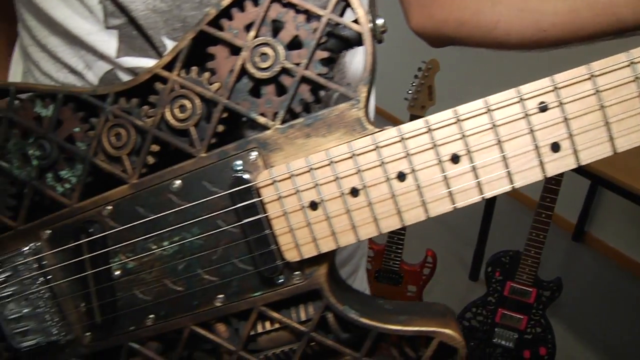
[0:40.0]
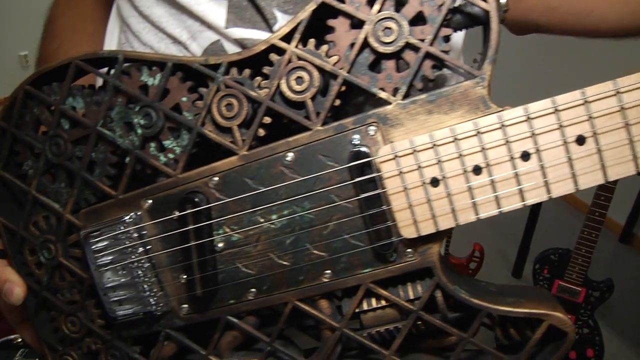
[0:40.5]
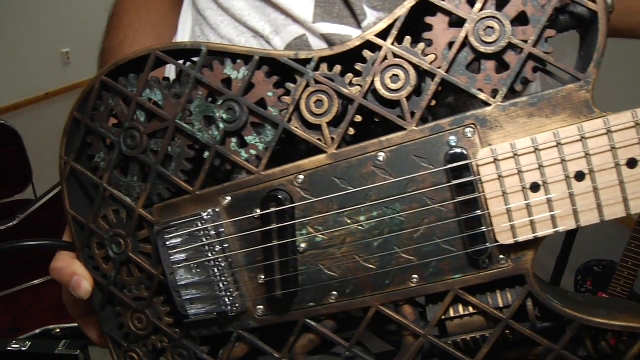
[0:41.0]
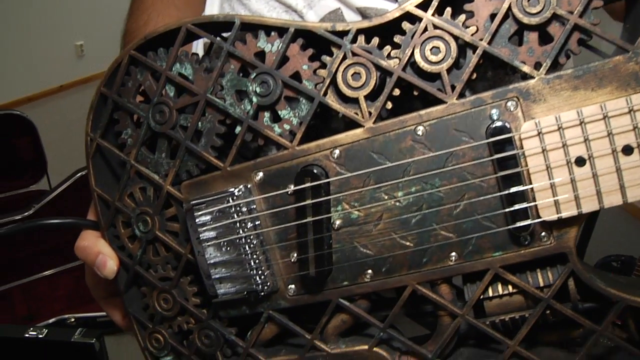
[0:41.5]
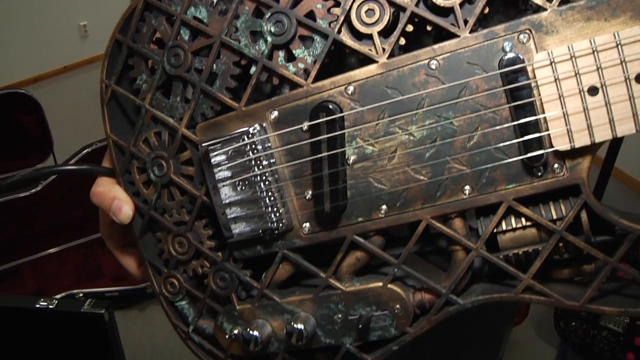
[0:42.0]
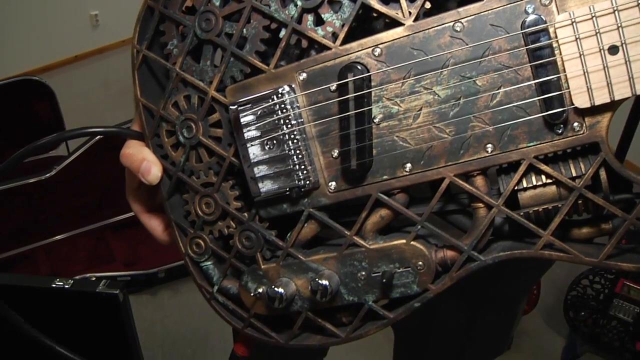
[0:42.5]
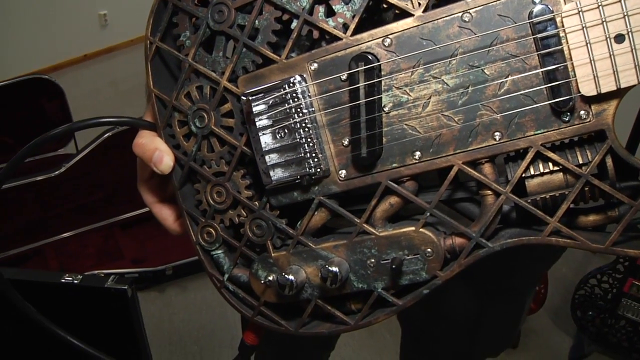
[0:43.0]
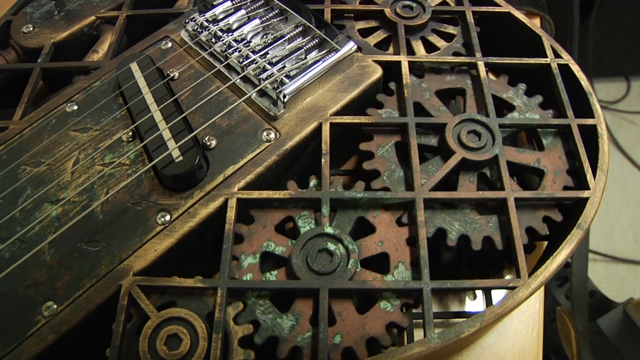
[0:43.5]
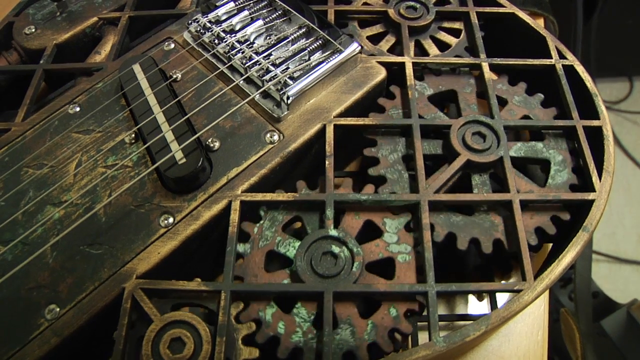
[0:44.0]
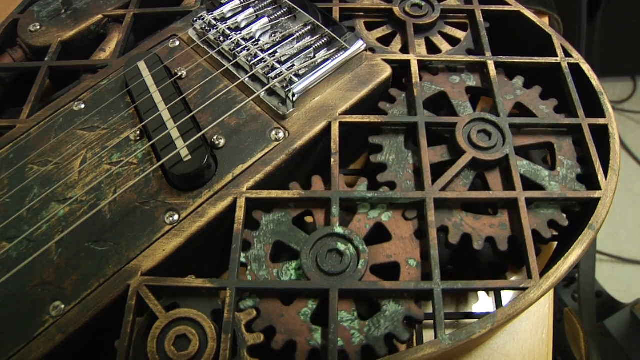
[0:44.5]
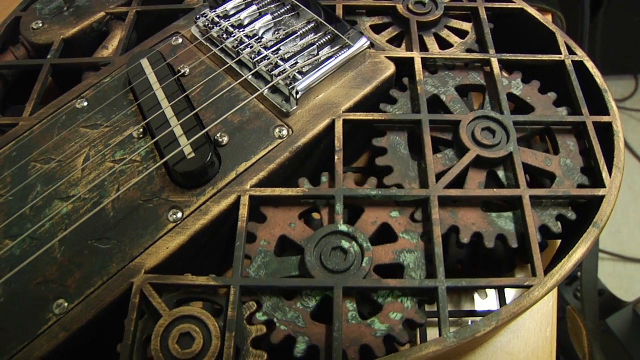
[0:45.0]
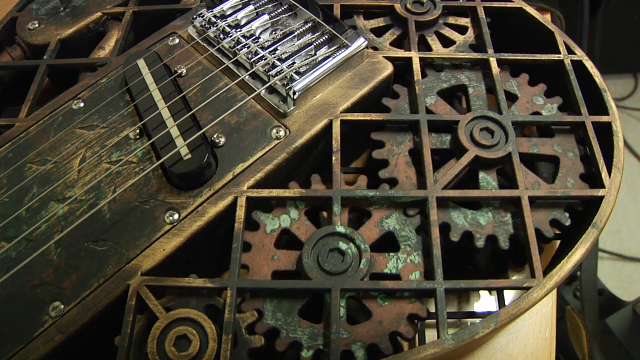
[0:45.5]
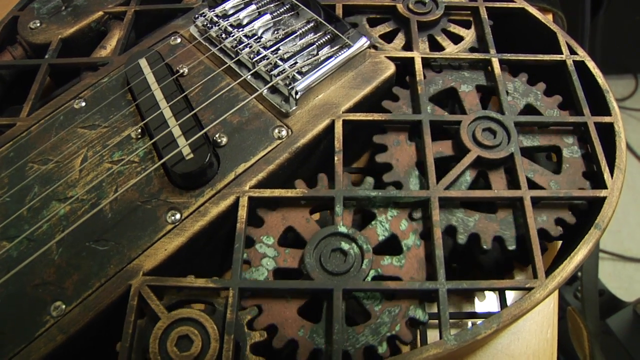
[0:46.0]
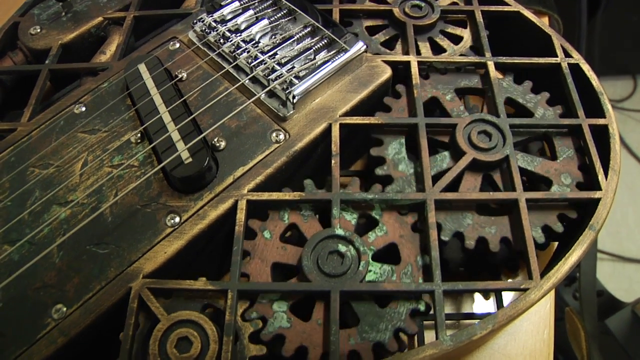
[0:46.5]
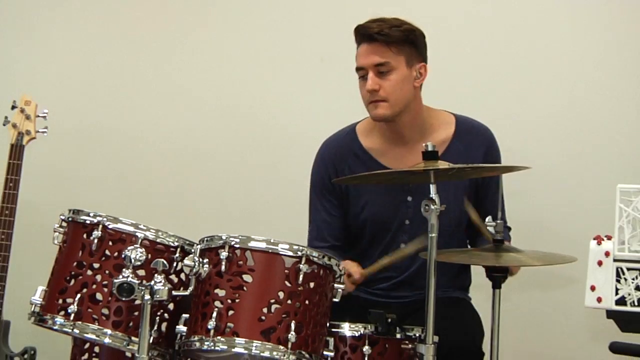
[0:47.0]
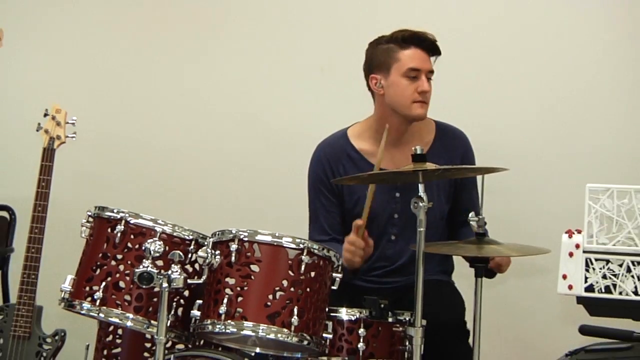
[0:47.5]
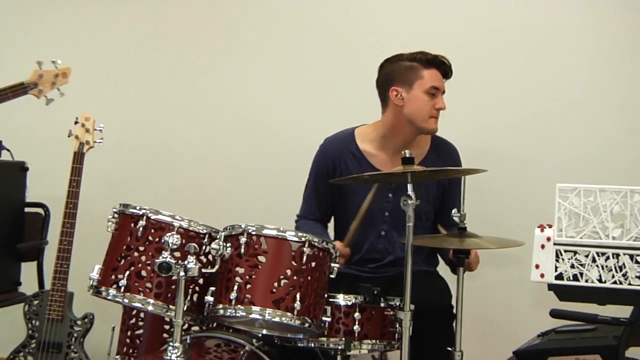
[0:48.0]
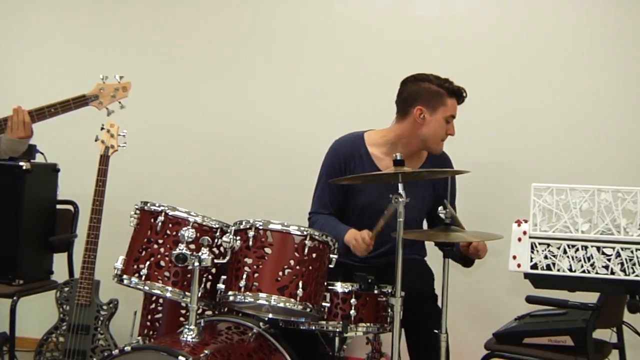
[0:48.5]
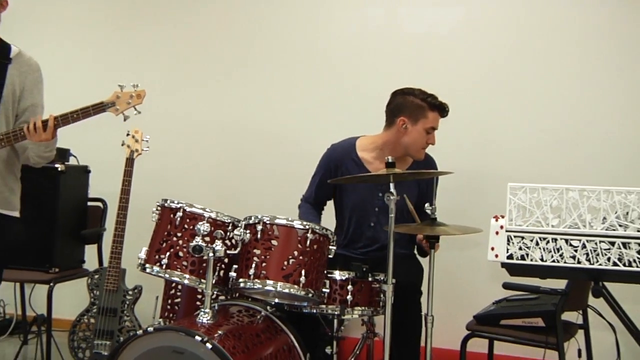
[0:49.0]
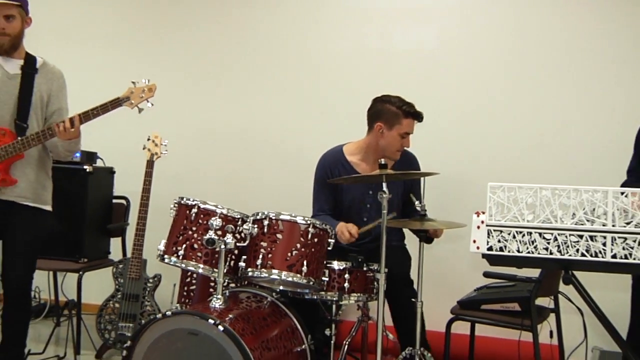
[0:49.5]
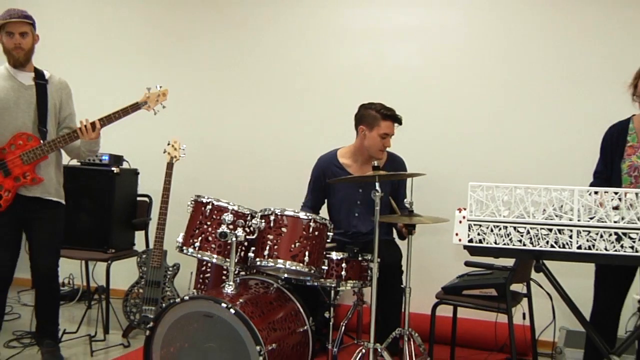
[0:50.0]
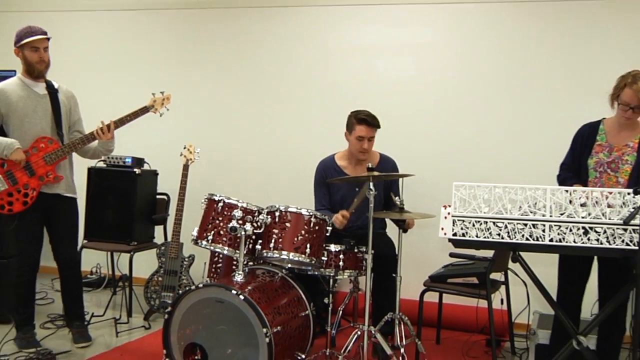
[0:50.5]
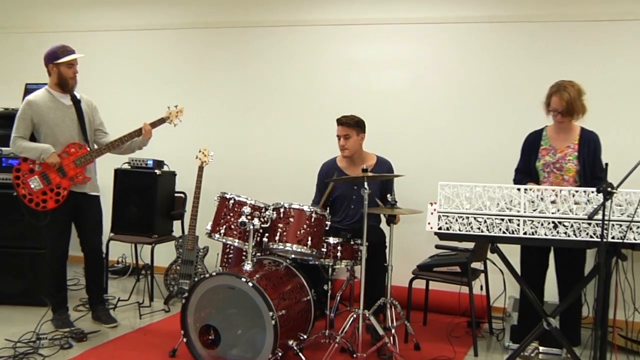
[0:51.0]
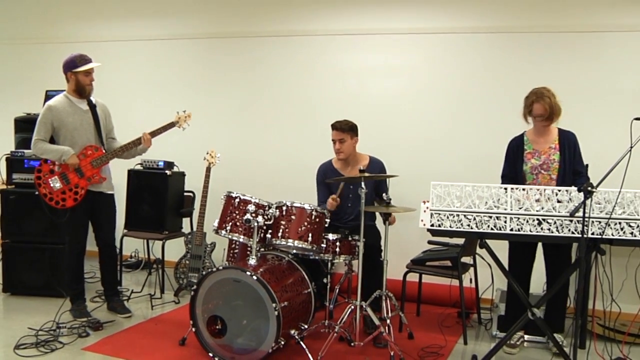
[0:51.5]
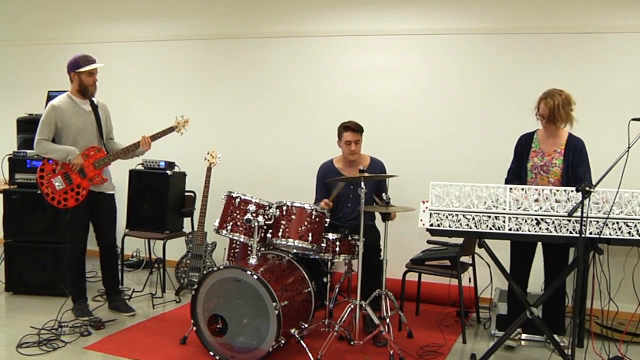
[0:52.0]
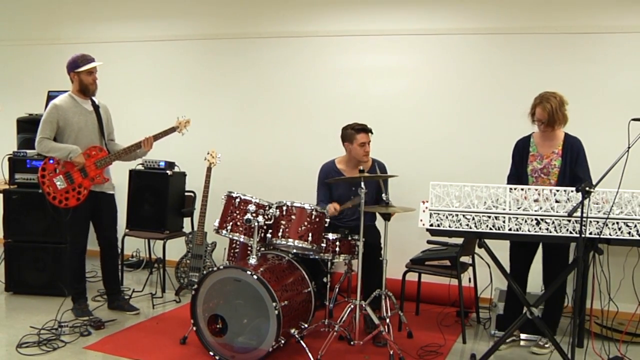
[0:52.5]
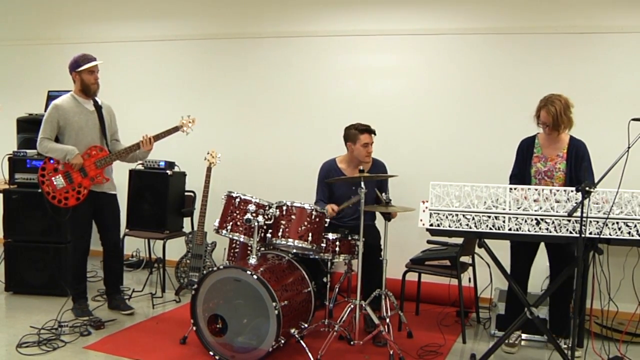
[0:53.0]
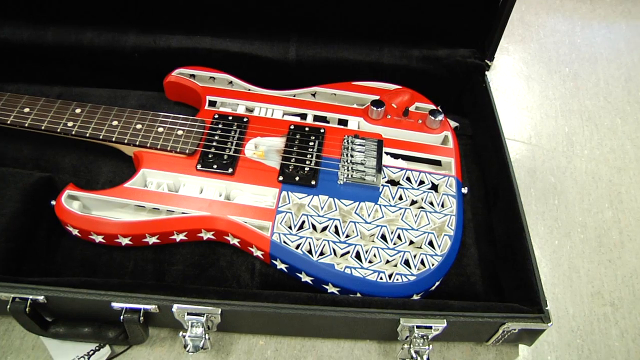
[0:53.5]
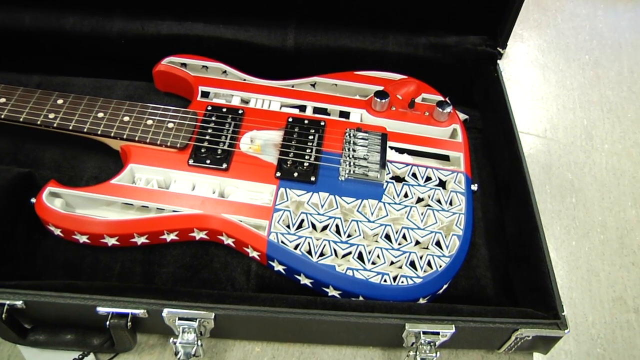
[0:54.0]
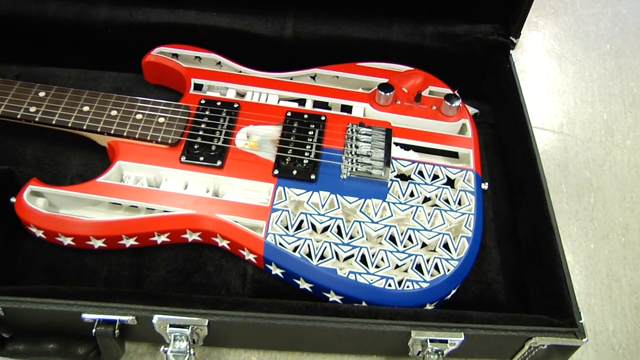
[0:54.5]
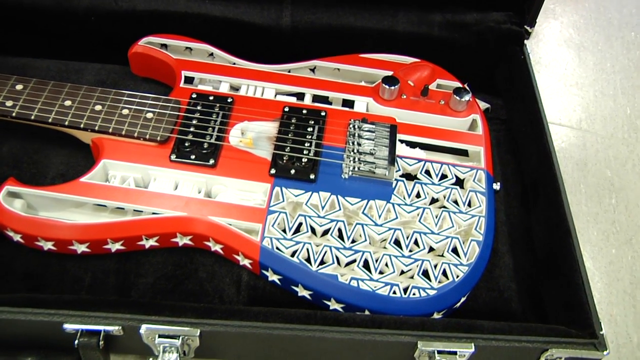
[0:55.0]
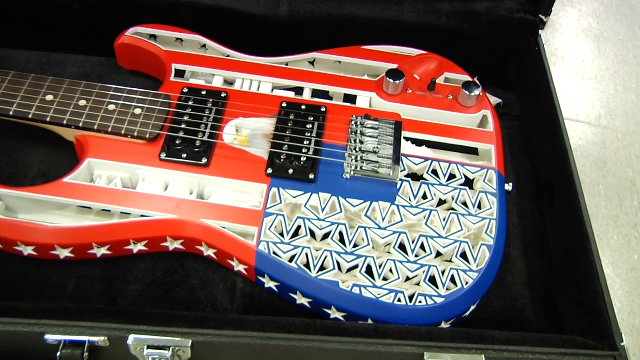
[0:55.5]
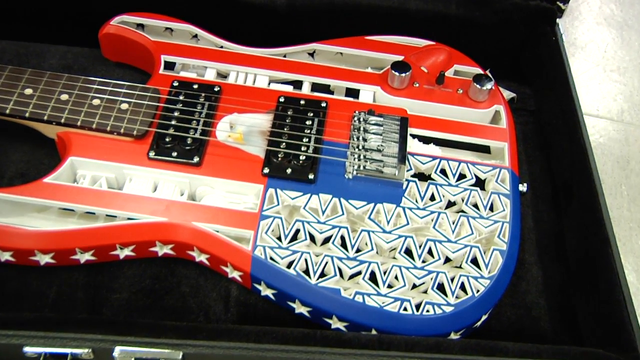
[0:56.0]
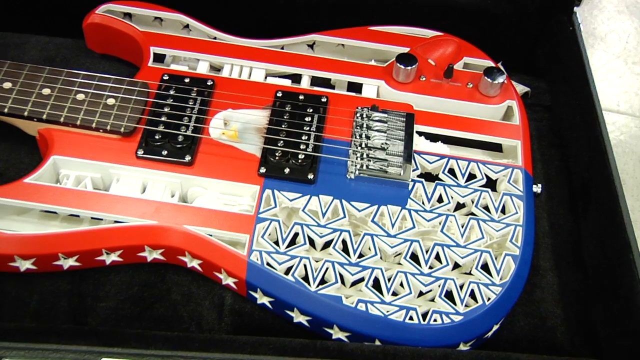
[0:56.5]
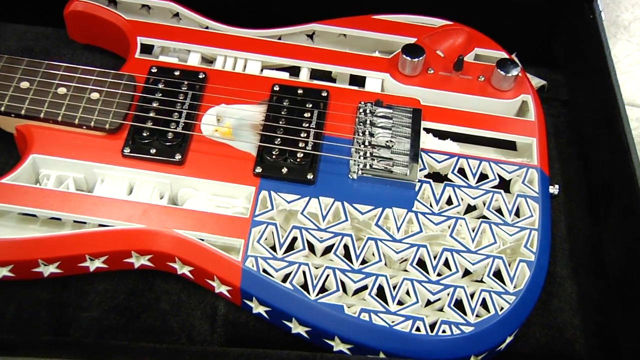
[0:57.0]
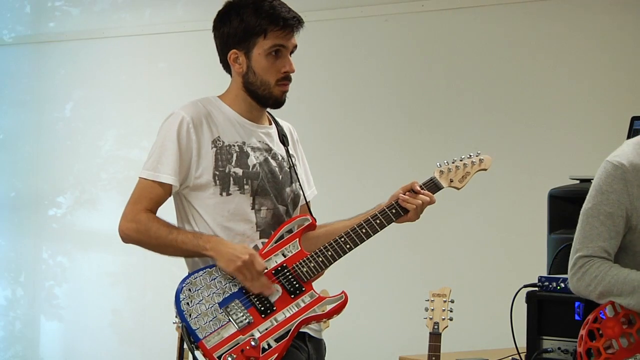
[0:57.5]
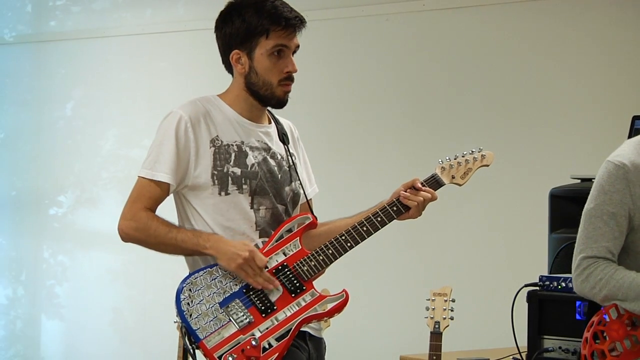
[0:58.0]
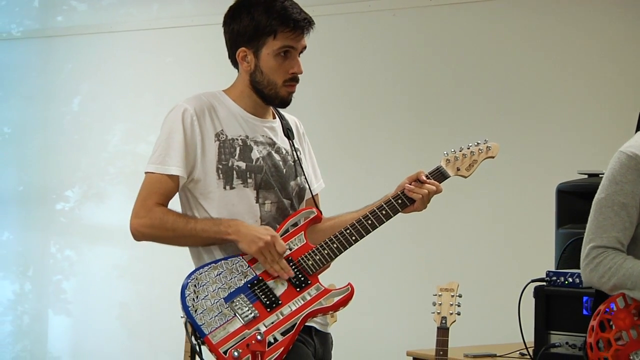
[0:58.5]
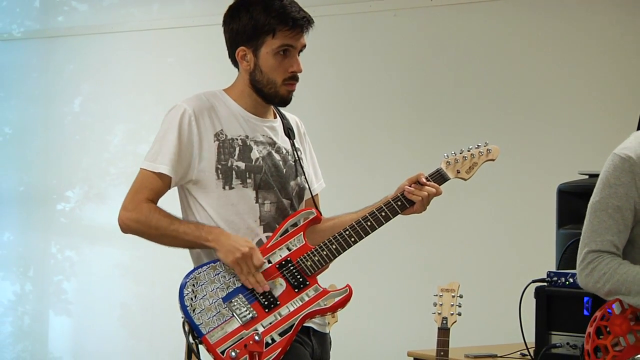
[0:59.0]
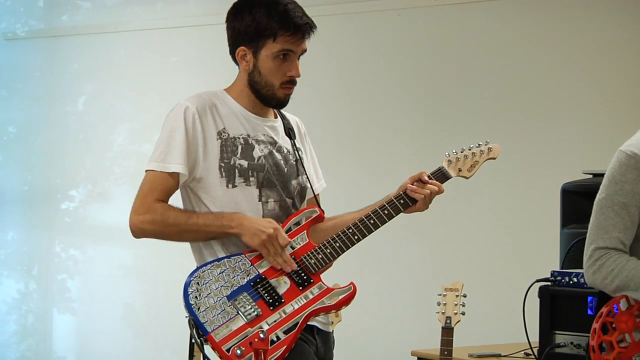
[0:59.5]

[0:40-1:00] The black and copper guitar appears for a second. A man appears to be holding it, and someone has their hands over it; it may be the guy who was playing another guitar behind the first guitarist, but this is uncertain. Another shot of the same guitar shows little wheels kind of inside it, resembling the reels of an old VHS tape or an old video camera, and the wheels appear to be spinning. It has a gold, rustic look. The video returns to the band: the drummer is drumming, shown up close first, and the girl on the keyboard is swaying, dancing a little and moving side to side. The other guy playing guitar is also visible, but only three of them are in that shot. The American flag guitar is now in a black felt-looking case, with part of the case lid visible, so it is possibly about to be closed up or put away. The camera zooms in on it, showing the stripes. Then a guy who looks like the same guitarist appears; earlier he had a baseball cap on, and now he does not. He is standing there playing the guitar.